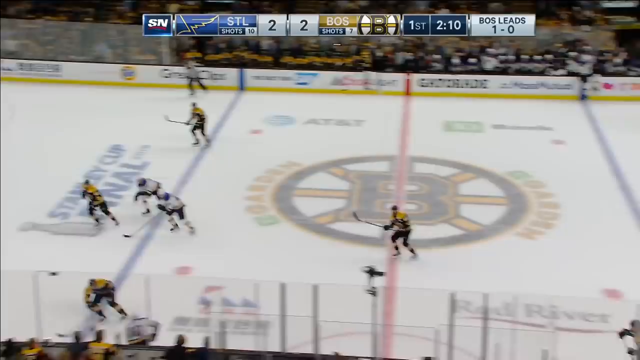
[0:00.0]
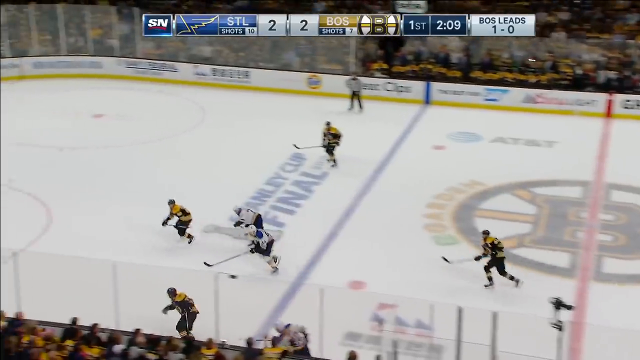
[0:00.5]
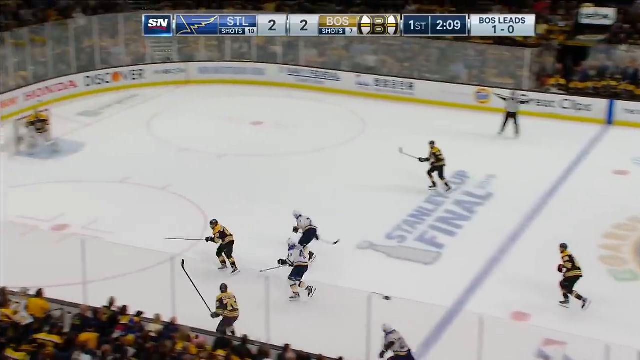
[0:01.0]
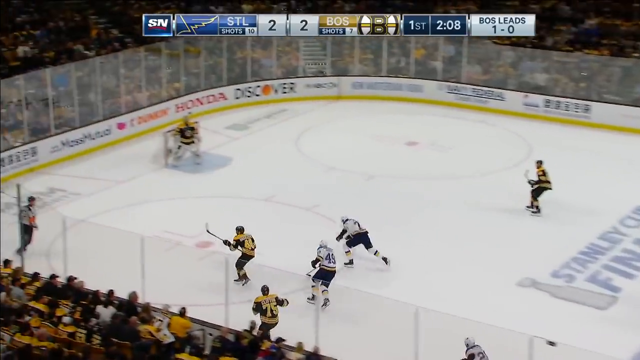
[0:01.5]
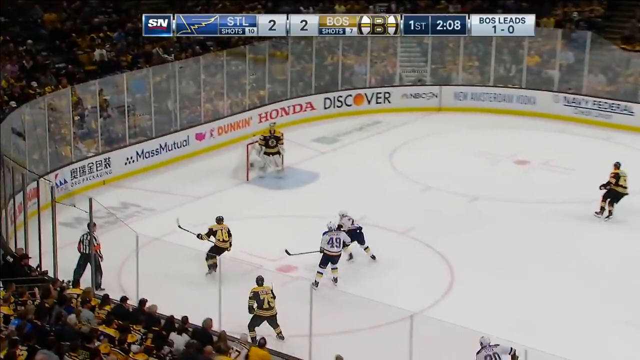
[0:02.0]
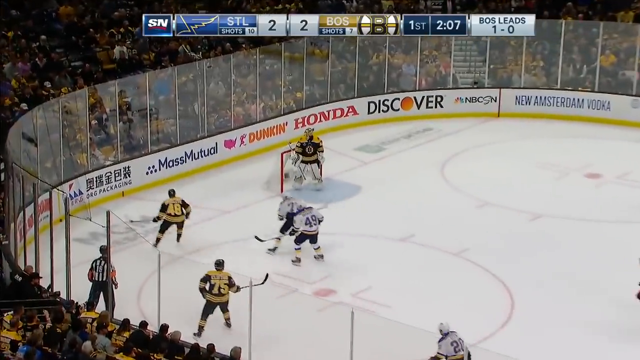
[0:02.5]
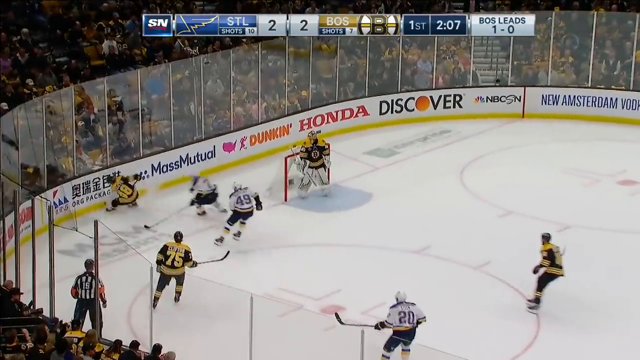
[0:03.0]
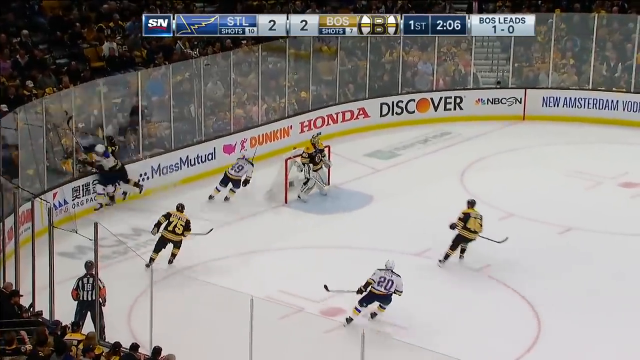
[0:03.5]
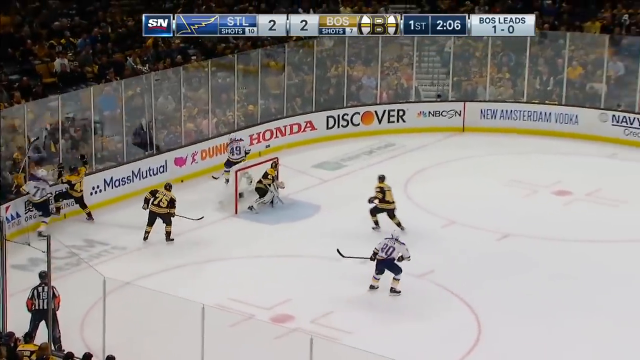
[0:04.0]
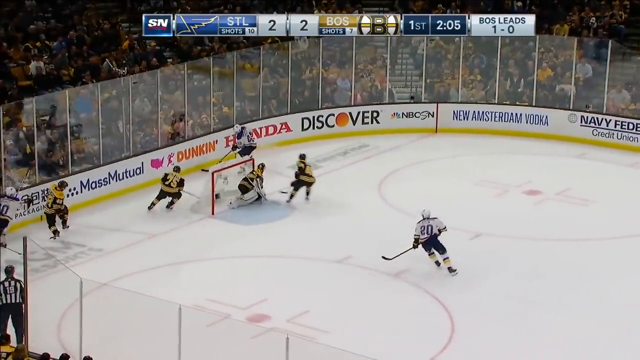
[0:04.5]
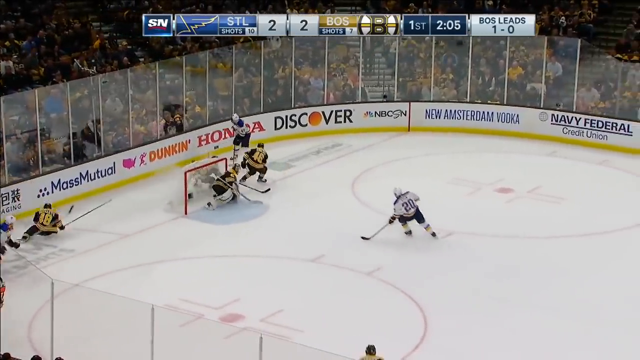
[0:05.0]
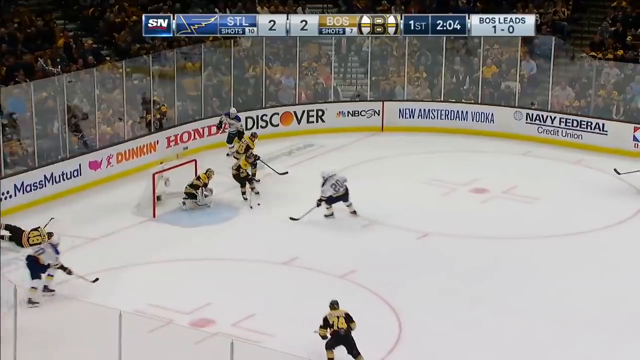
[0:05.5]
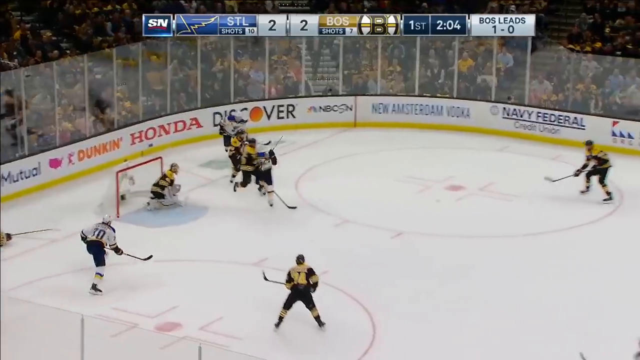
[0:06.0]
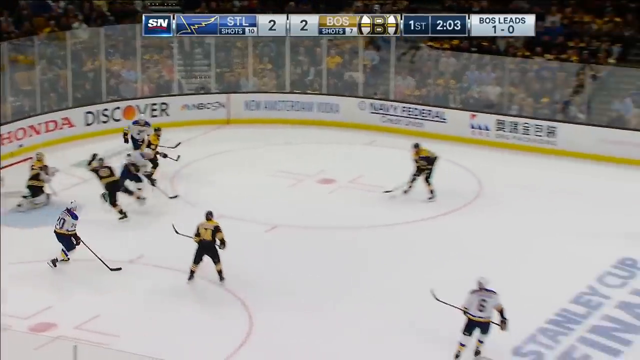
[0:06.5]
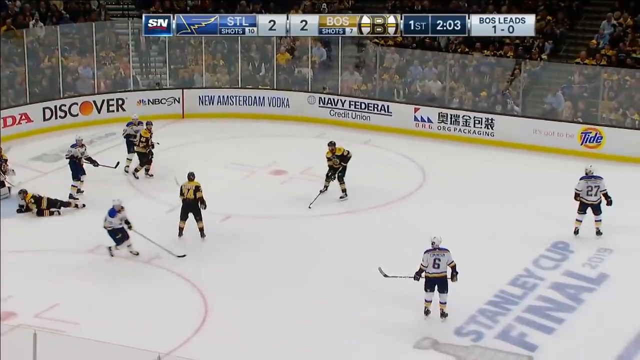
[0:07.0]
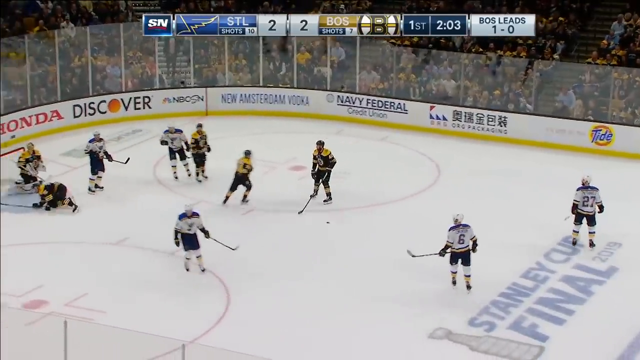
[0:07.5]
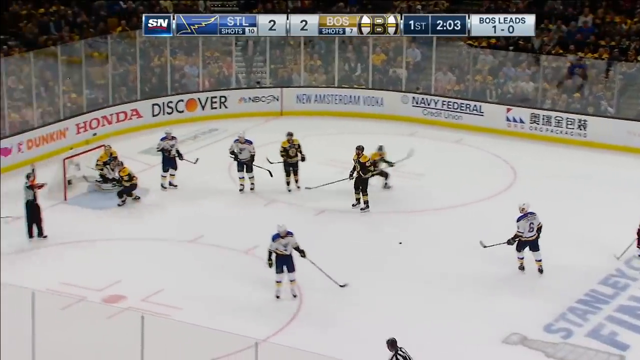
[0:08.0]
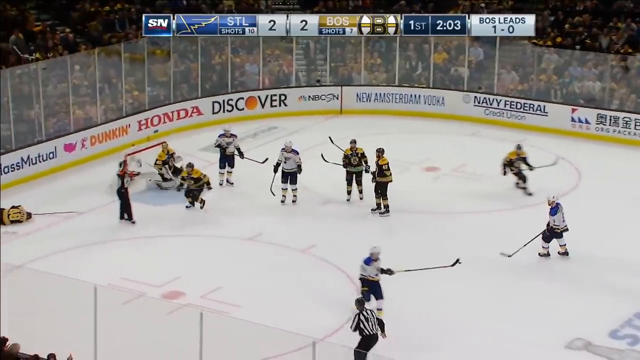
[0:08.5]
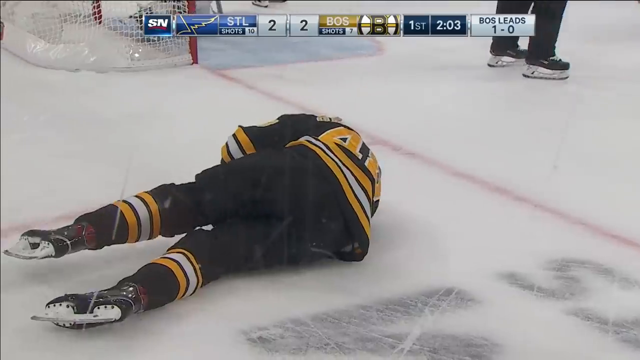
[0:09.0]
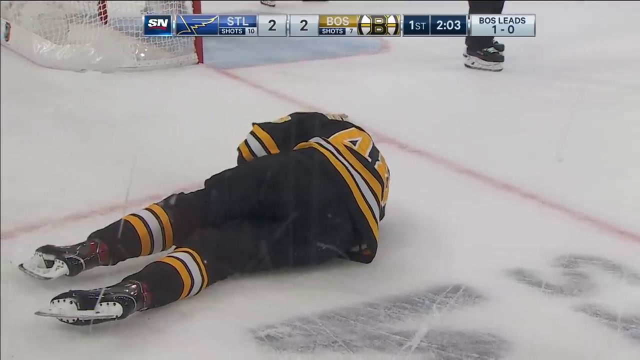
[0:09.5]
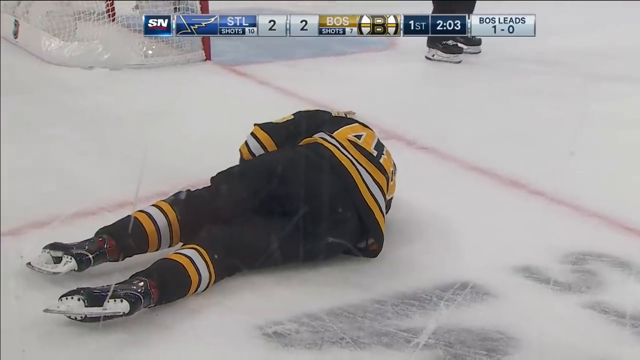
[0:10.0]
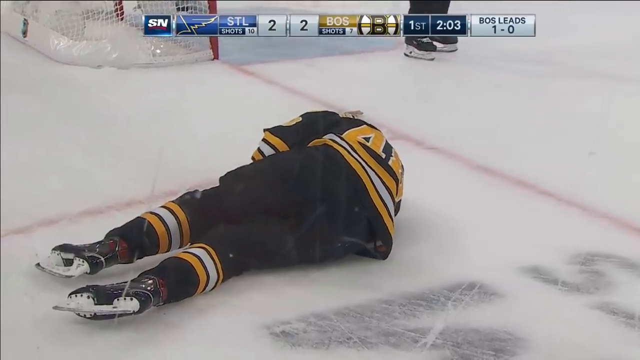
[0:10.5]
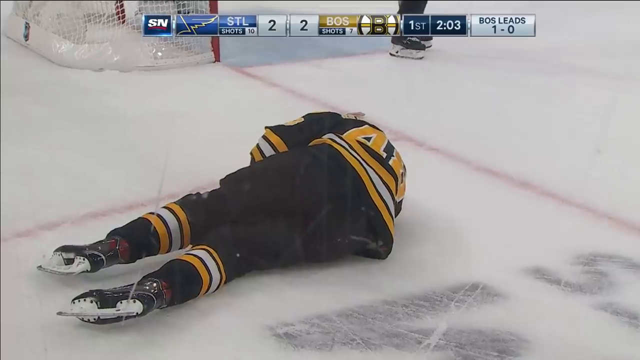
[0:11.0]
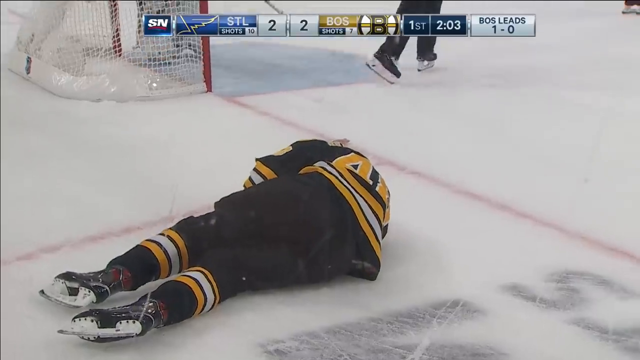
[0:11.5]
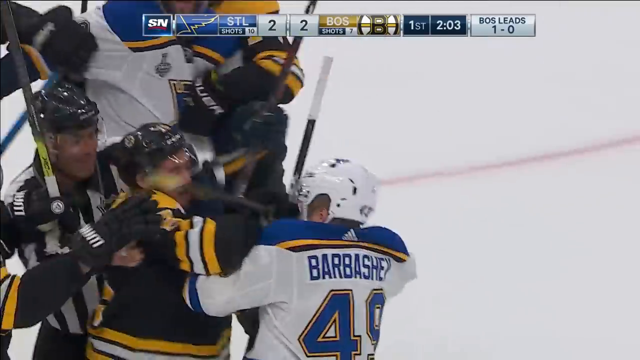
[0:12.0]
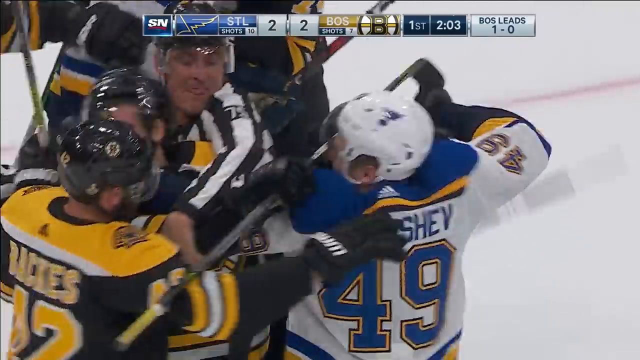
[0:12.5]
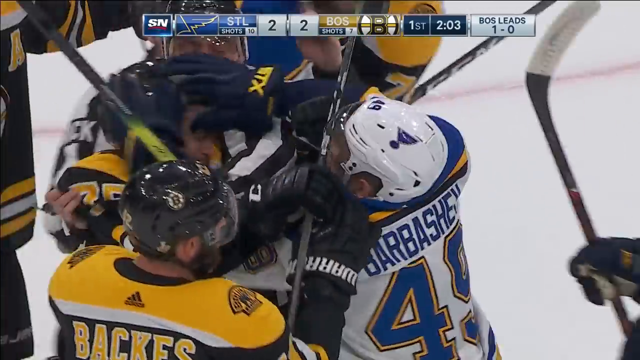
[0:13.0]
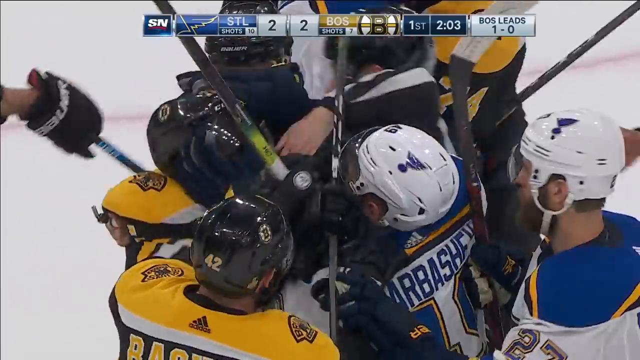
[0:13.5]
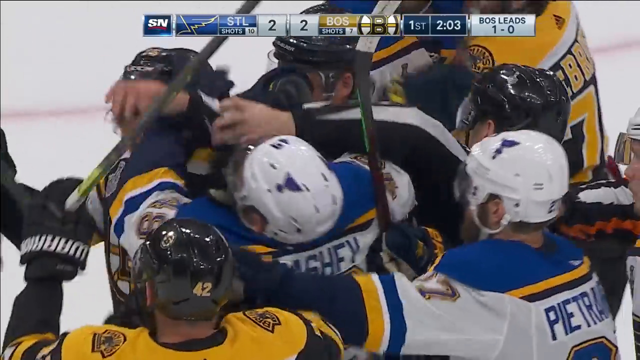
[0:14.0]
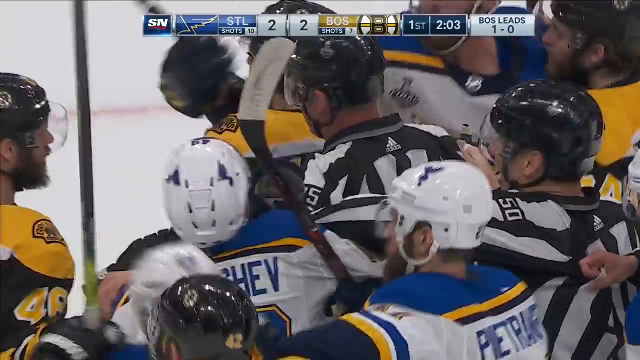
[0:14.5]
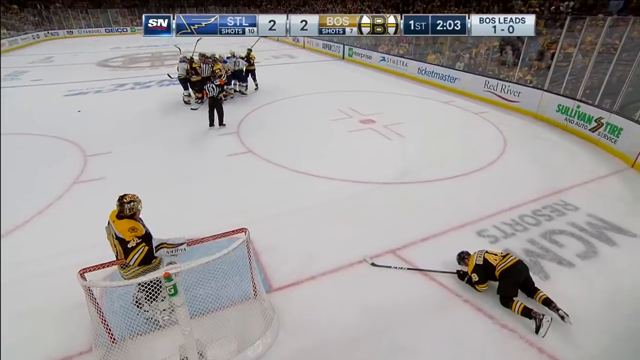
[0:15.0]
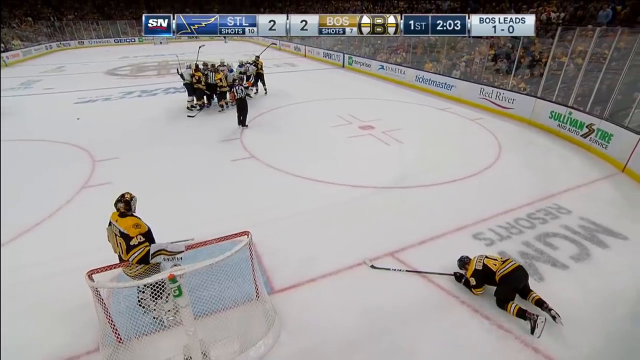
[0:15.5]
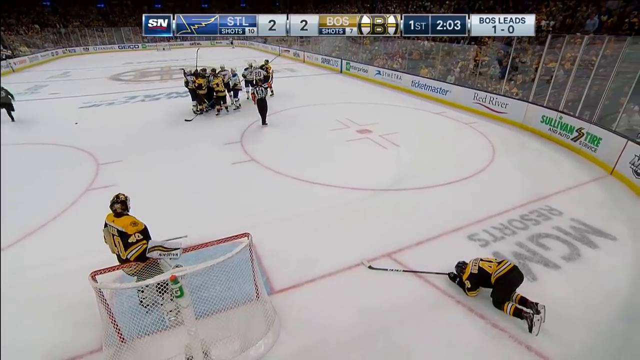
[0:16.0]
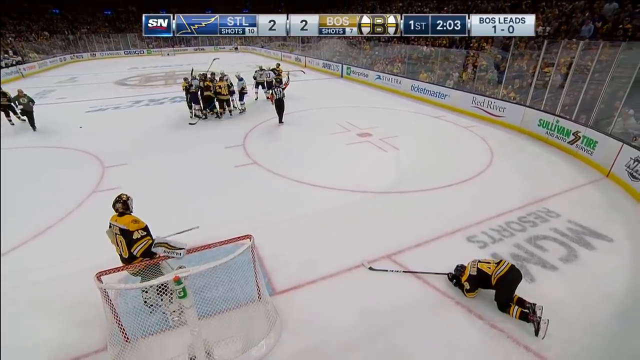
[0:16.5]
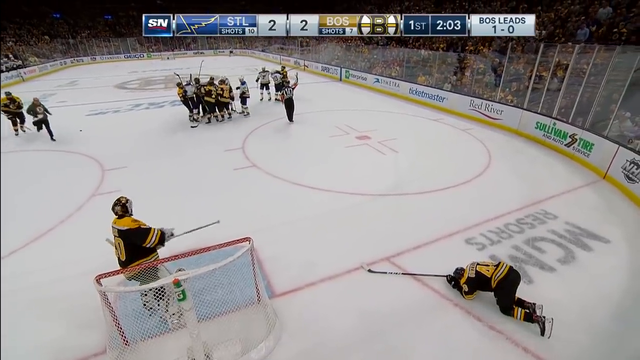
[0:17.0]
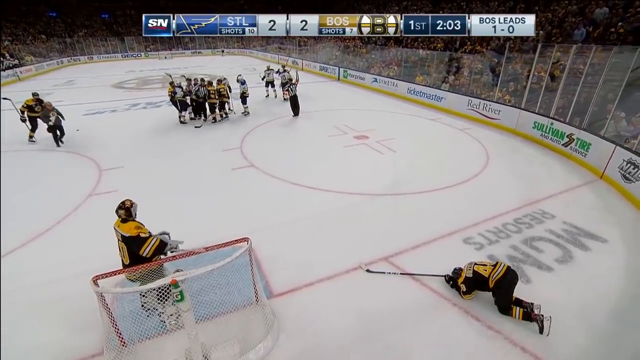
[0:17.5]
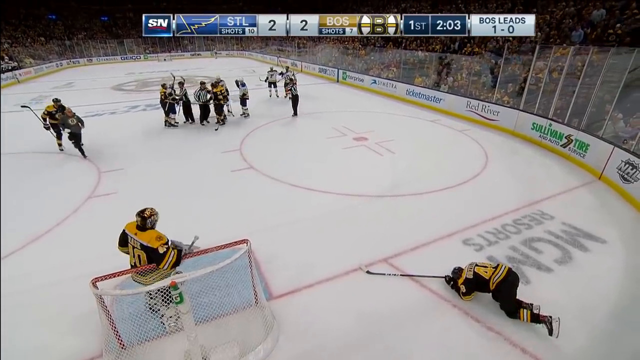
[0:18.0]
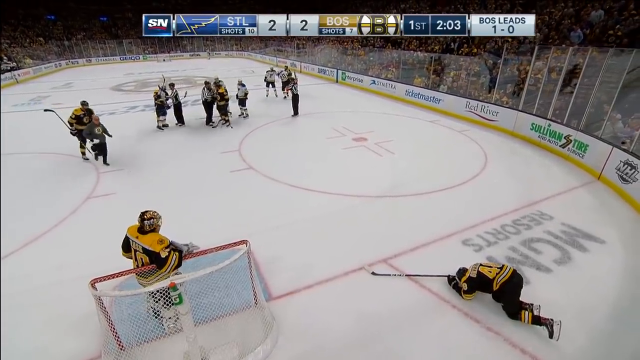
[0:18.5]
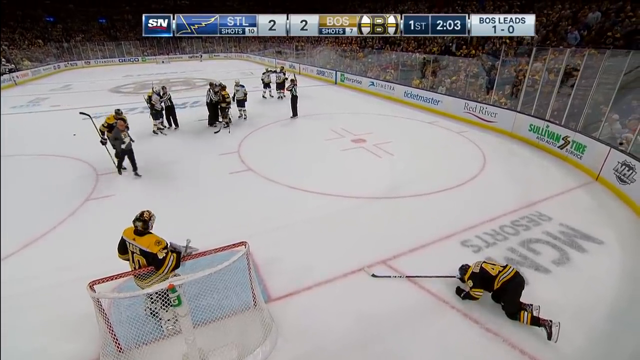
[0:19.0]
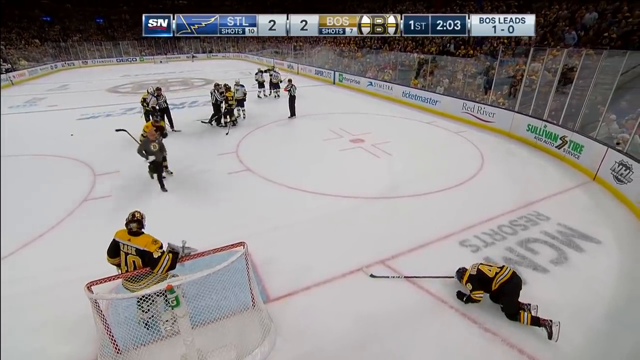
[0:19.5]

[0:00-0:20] A group of hockey players is on an ice rink, some in yellow and black outfits and others in something more like white and blue. They are toward the left side of the rink, with crowds all around them and a white, fenced-in area surrounding them that carries sponsor logos including Dunkin', Honda, Discover, NBC, New Amsterdam, Vodka and others. The players move toward the goalie on the left, and a couple of them run into the wall on the left while the puck is moved around. Someone in a black and yellow jersey seems to have gotten hurt and is on the ground. A big fight then breaks out between players from the different teams, and they go at each other until the referee comes and breaks them up. The player on the ground is still there, clearly in pain, with his stick in front of him. Play stops for a moment, and some people come up to where he is; one of them has something in their hands.